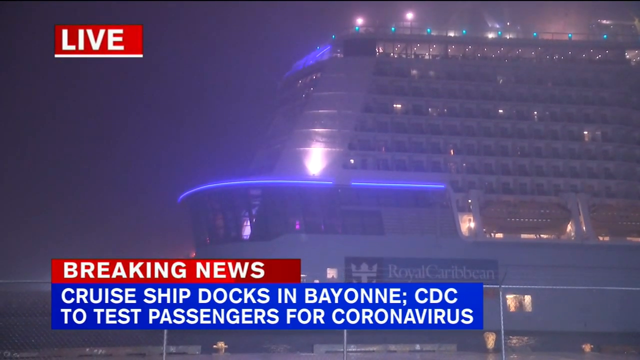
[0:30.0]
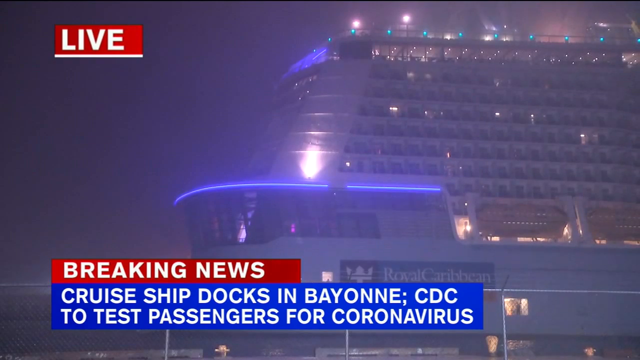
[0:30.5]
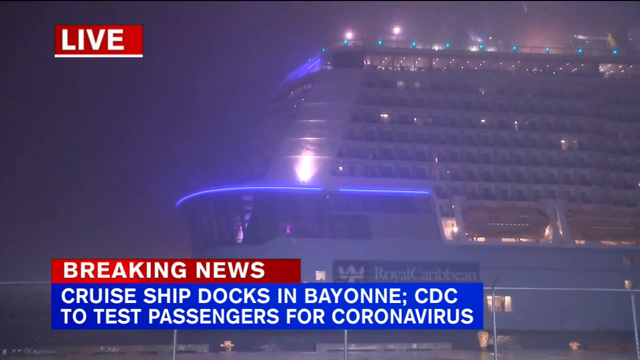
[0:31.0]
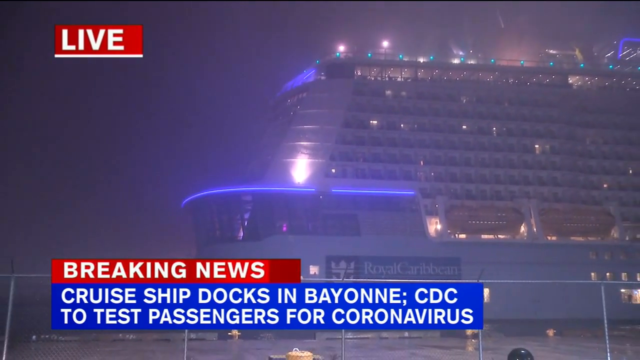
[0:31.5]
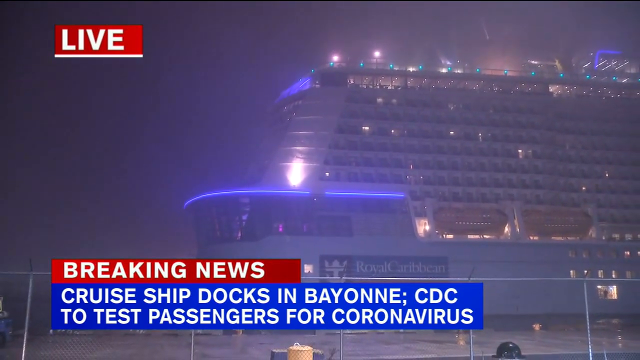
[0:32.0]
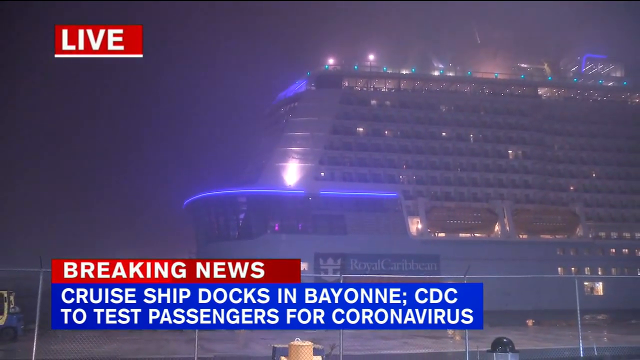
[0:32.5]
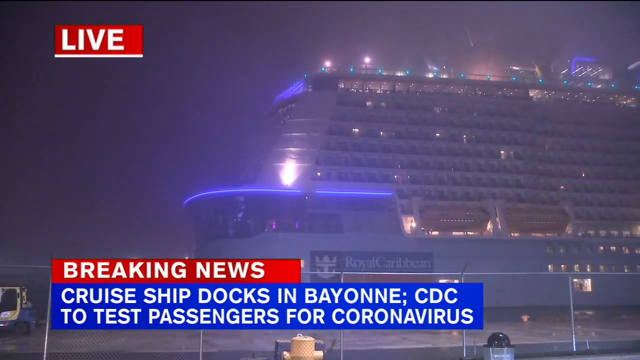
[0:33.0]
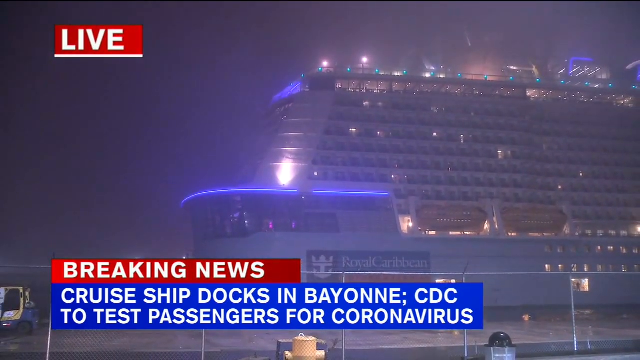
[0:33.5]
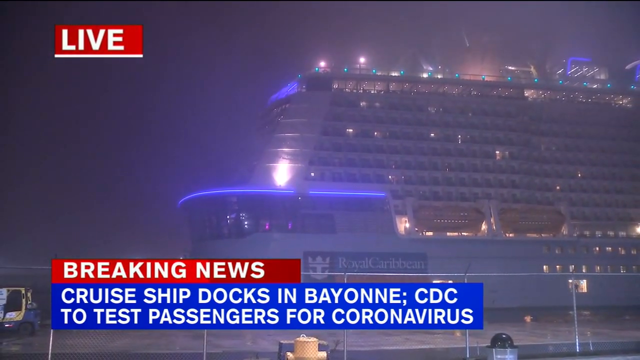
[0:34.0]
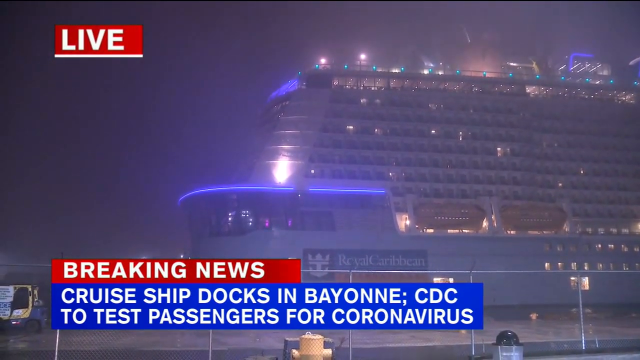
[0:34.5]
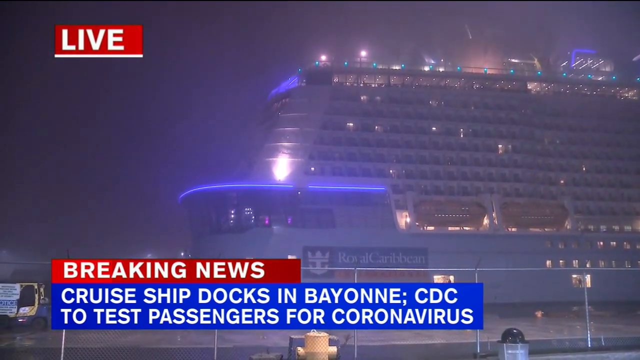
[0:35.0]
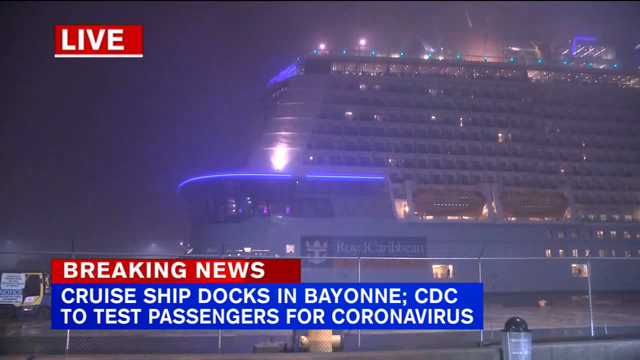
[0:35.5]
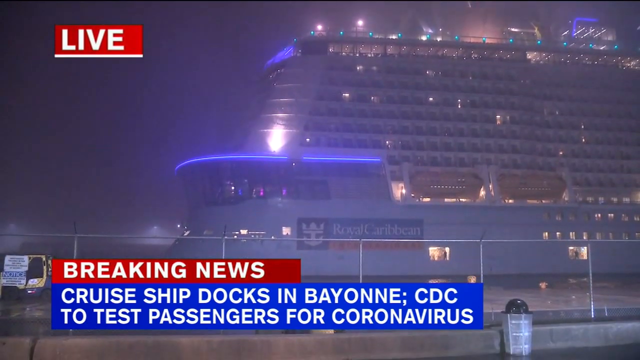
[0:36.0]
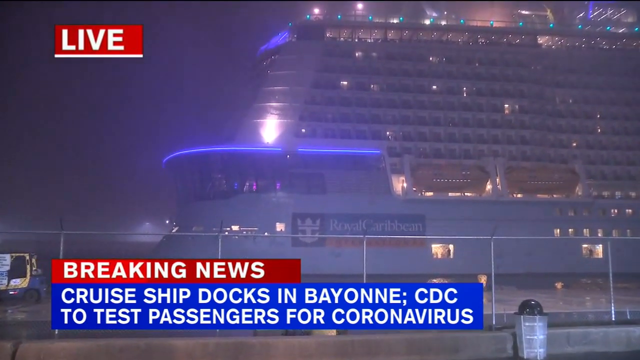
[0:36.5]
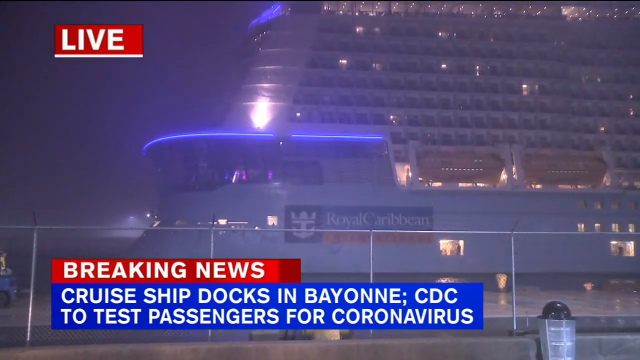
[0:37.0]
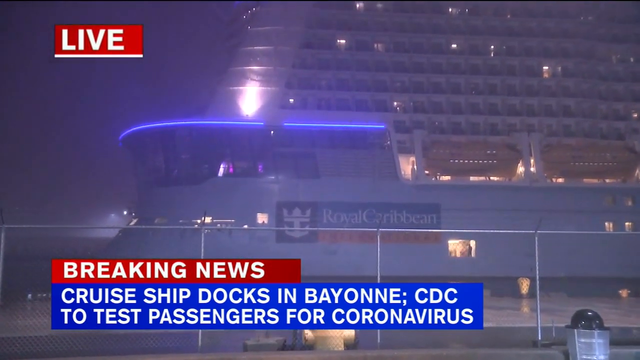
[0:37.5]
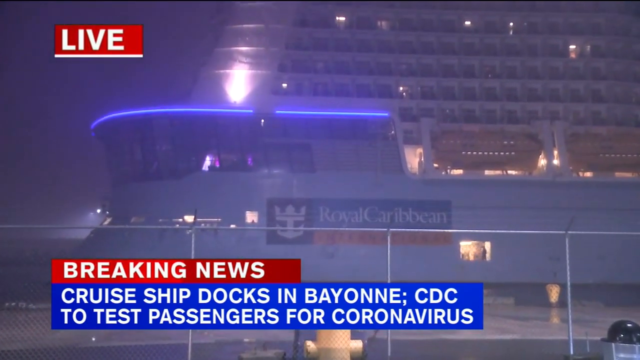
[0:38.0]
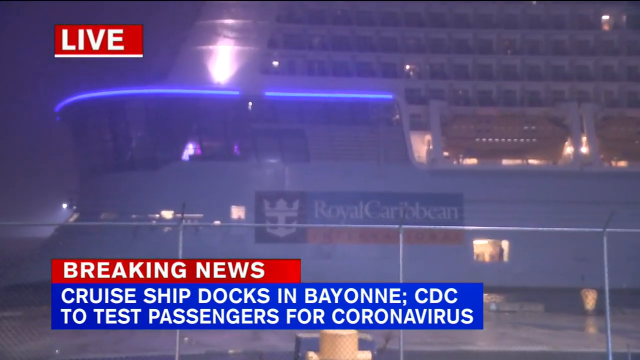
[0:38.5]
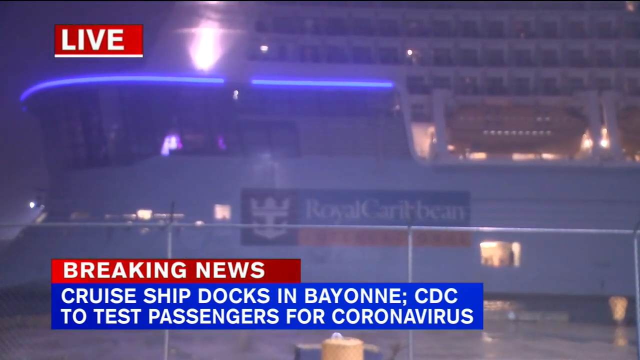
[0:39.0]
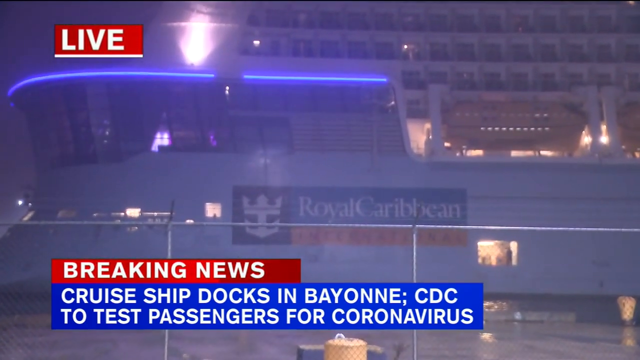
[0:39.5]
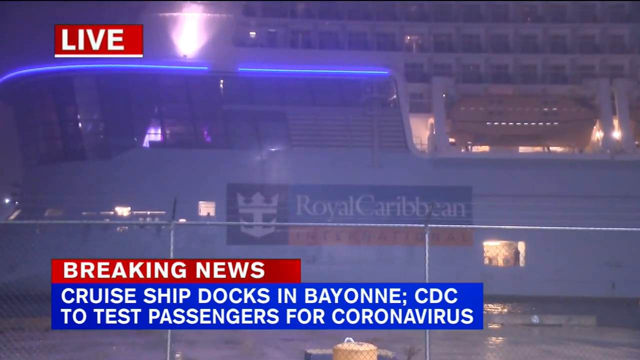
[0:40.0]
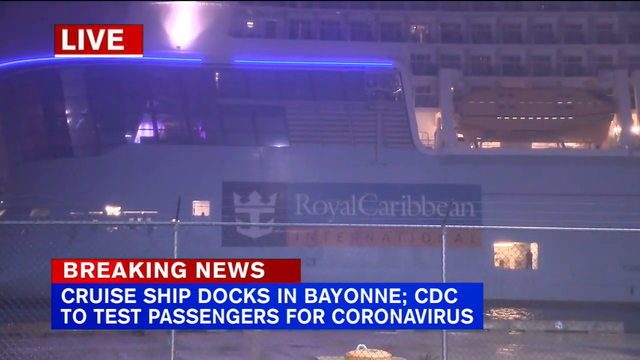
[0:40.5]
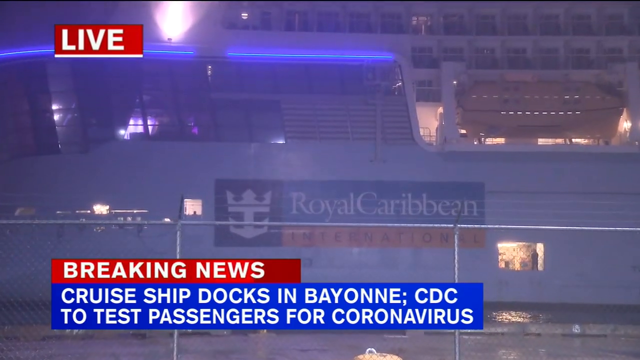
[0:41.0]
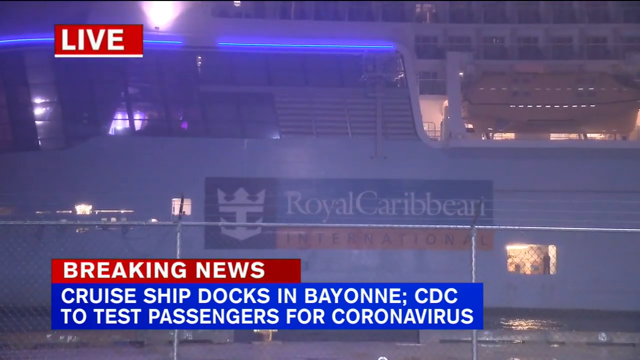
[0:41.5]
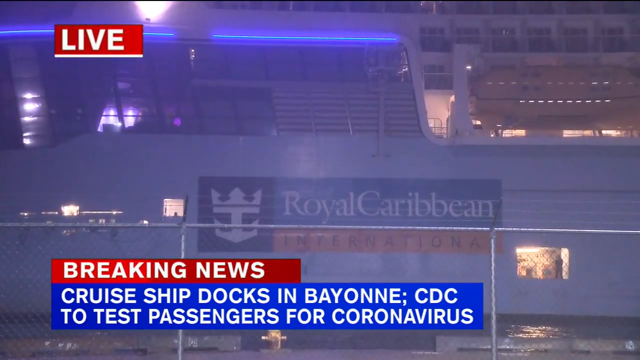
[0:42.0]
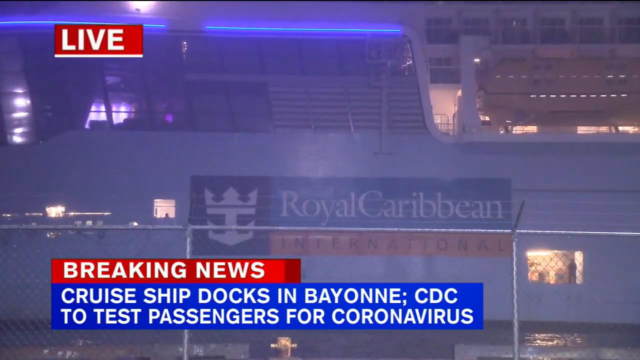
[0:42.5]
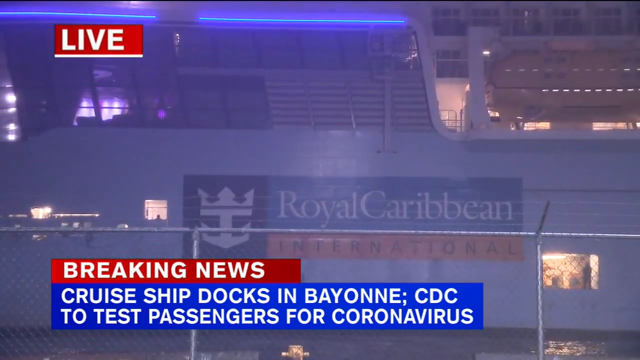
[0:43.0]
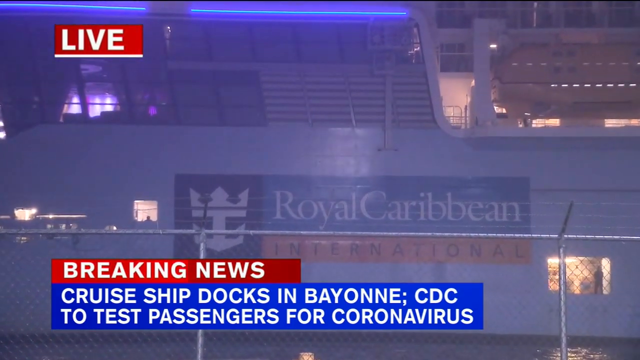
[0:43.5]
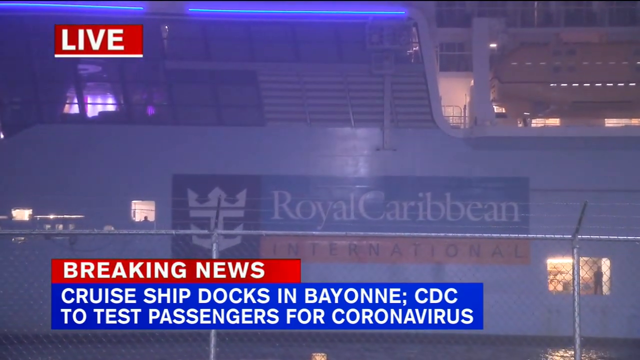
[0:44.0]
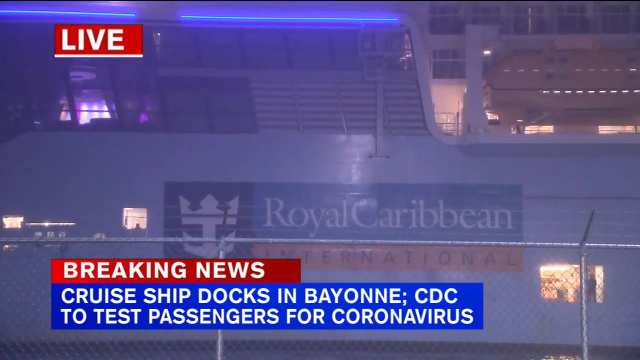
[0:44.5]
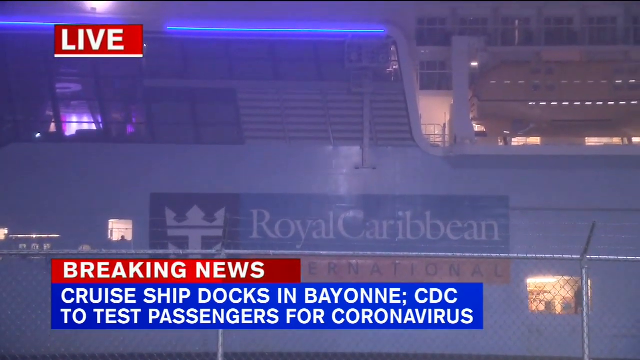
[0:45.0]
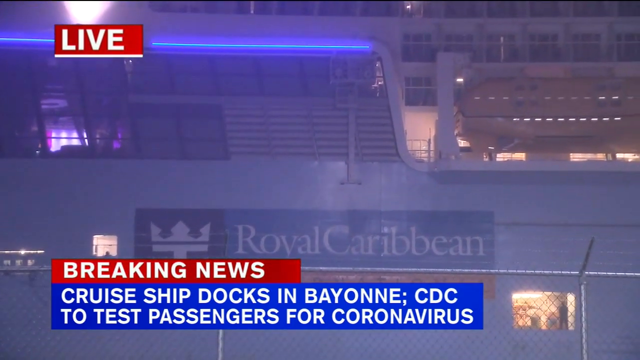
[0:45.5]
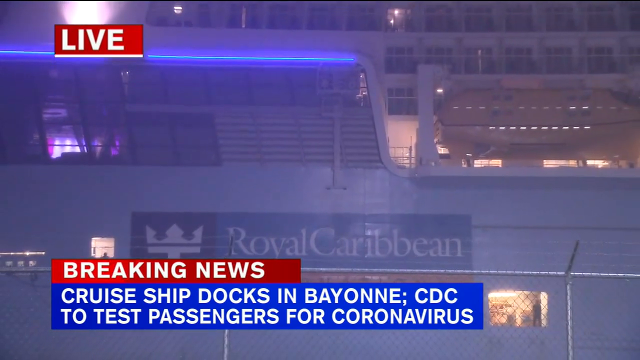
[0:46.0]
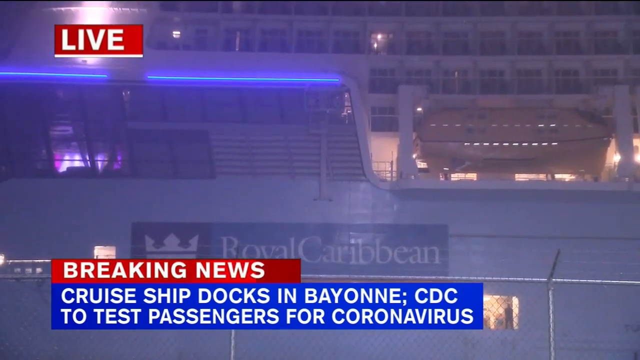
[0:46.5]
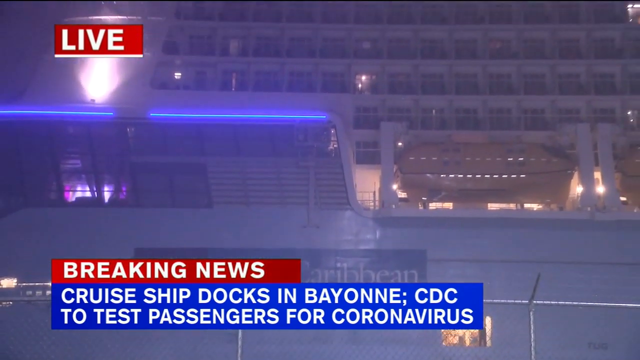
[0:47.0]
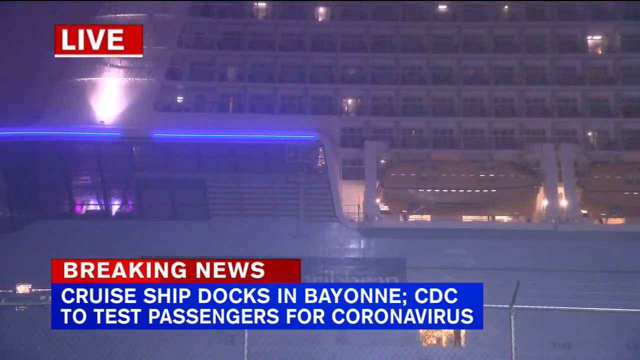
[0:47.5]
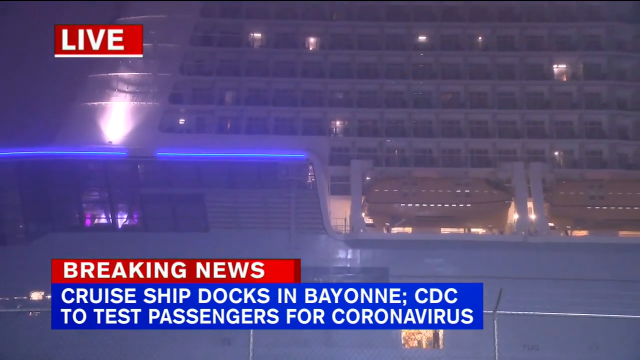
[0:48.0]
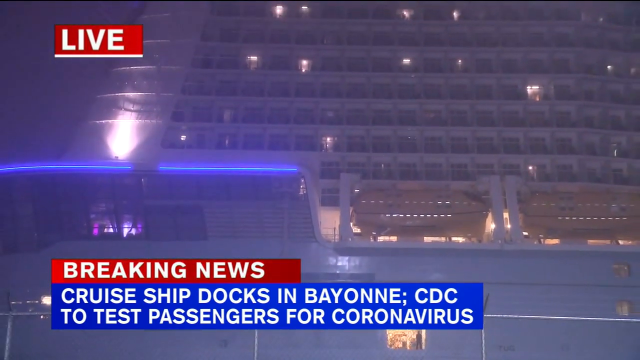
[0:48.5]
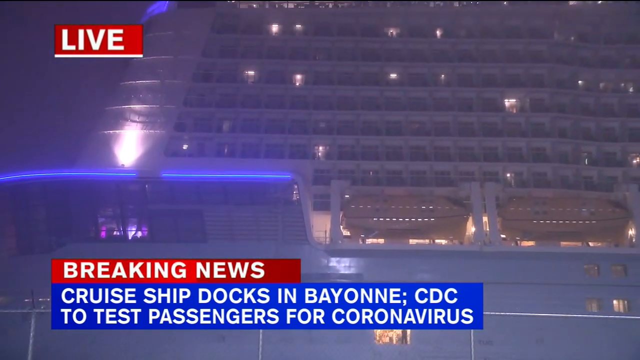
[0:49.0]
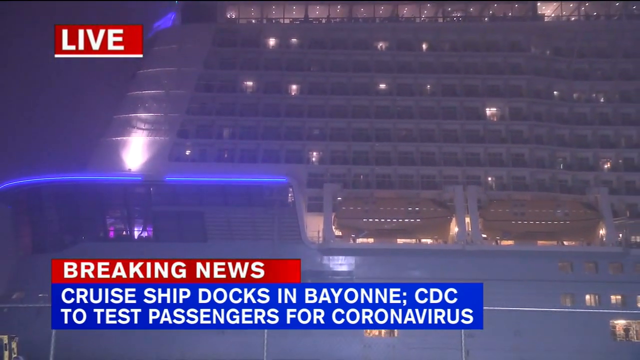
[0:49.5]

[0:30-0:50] A cruise ship has the name "Diamond Princess" on it. A few people are next to a white ambulance with Japanese characters and the word "ambulance" on each side. The people are dressed in what appears to be protective gear; one person in a light blue suit and another in a yellow vest are visible. The setting is a large open port area on a clear, bright day. An on-screen message on a white and blue background reads "Eight Americans on the Japanese cruise ship, we have tested positive for coronavirus," with "breaking news" at the top of the screen. The shot changes from the ship to a closer shot of the ambulance and a person on the dock. The focus then shifts to a different cruise ship named Anthem of the Seas, a Royal Caribbean cruise ship, at a port in Bayonne, New Jersey. It is night, or at least a very dark and foggy day. The ship is massive with multiple decks, and "Anthem of the Seas" is brightly lit in blue on each side. A wide, static view shows the ship, and the atmosphere is hazy or foggy. The video then changes to a male news reporter standing in front of the ship, wearing a tan jacket.